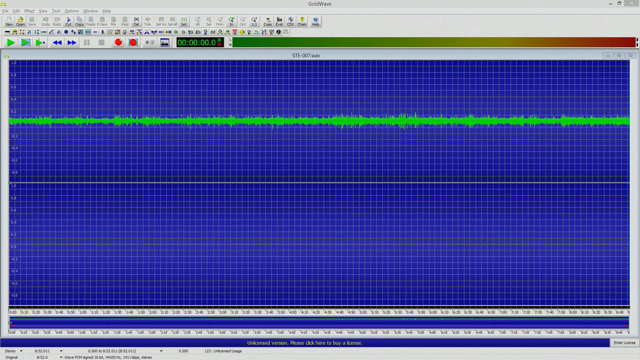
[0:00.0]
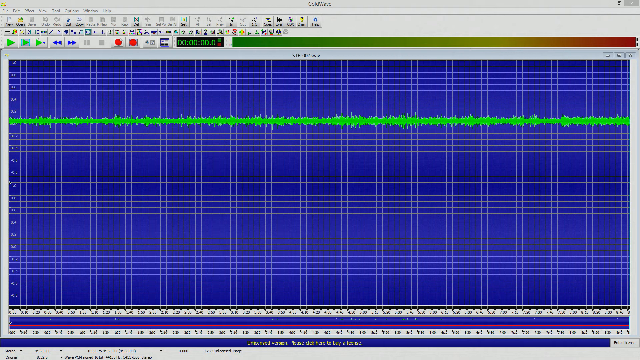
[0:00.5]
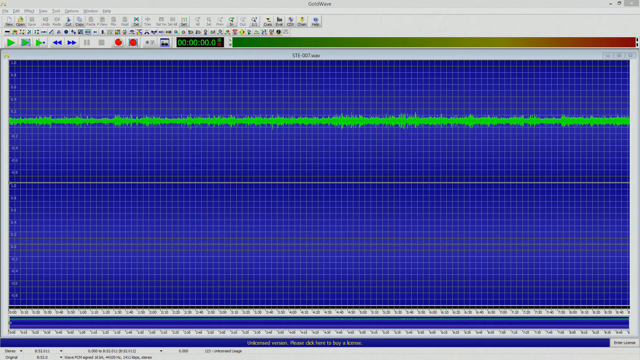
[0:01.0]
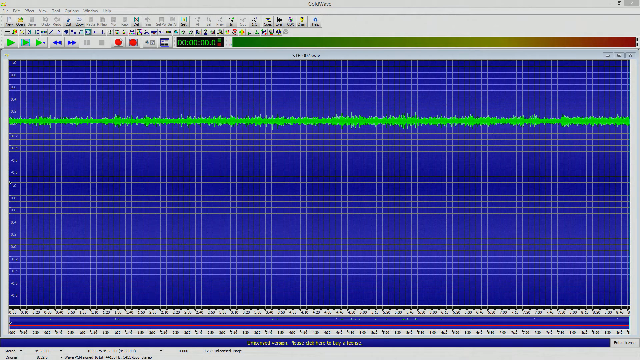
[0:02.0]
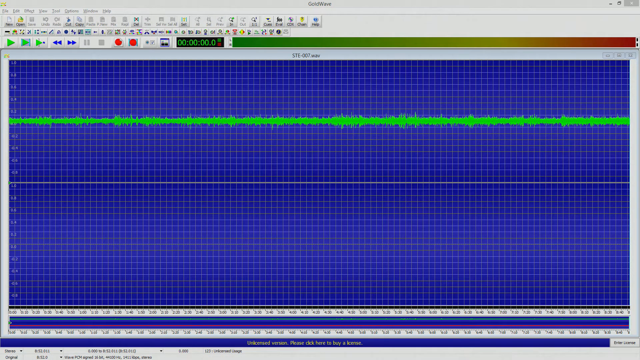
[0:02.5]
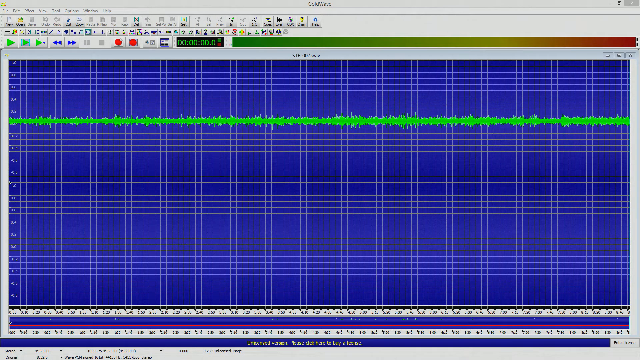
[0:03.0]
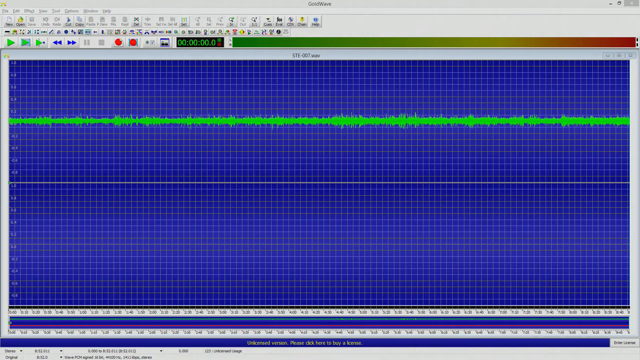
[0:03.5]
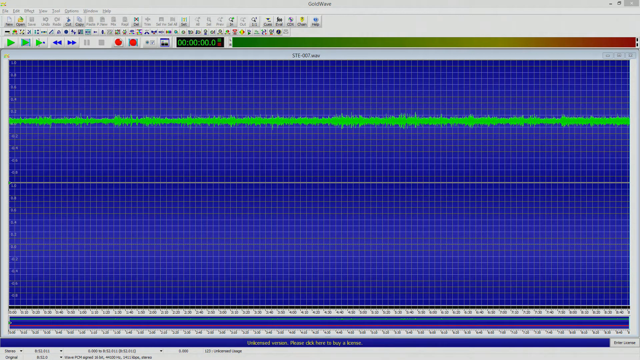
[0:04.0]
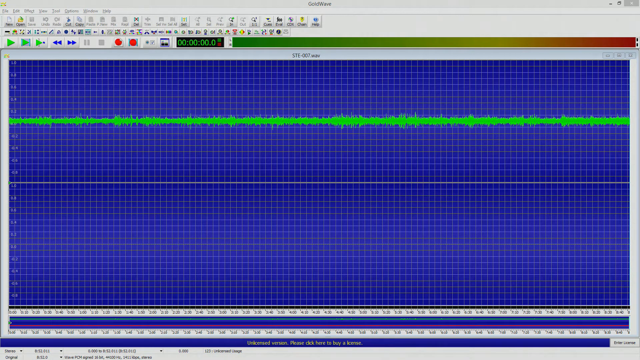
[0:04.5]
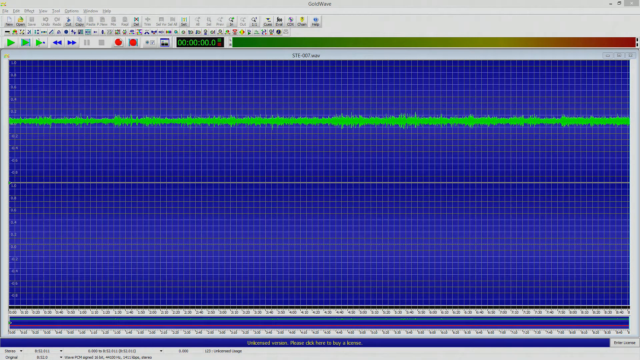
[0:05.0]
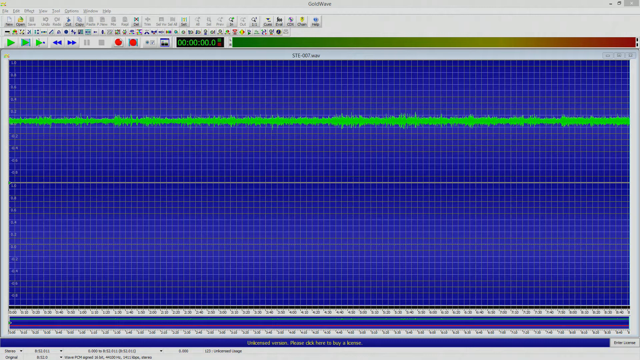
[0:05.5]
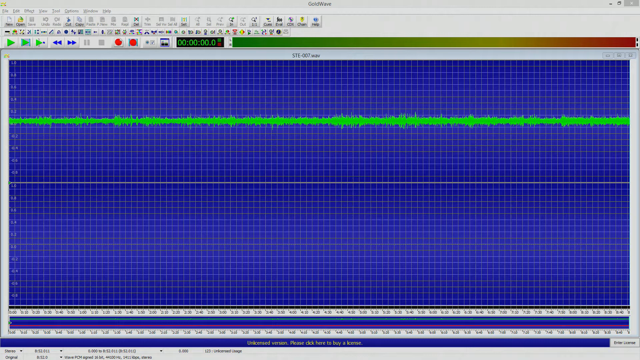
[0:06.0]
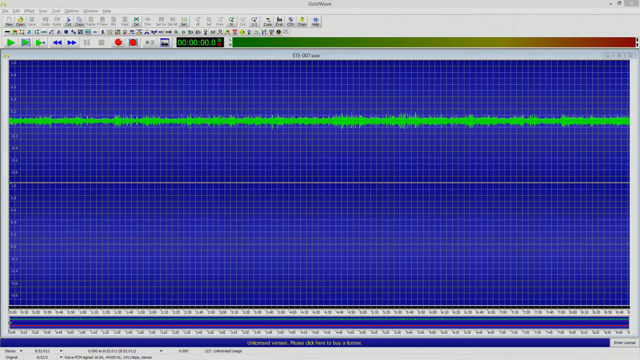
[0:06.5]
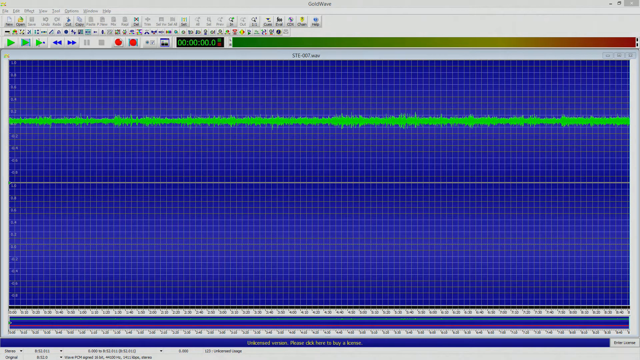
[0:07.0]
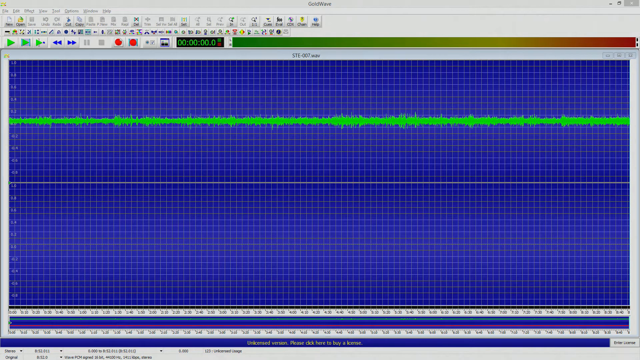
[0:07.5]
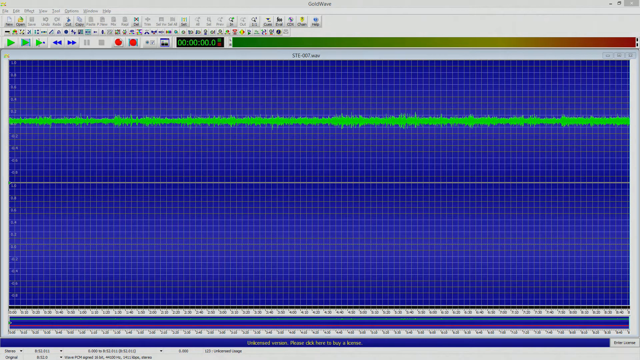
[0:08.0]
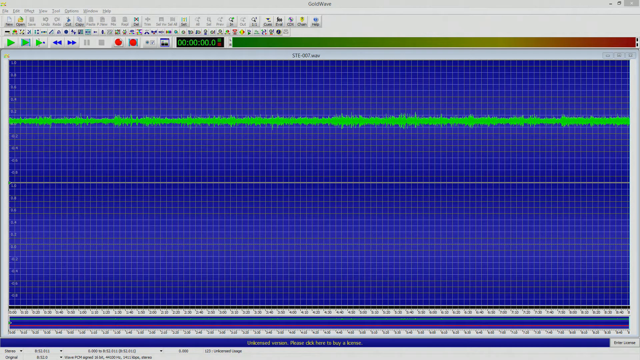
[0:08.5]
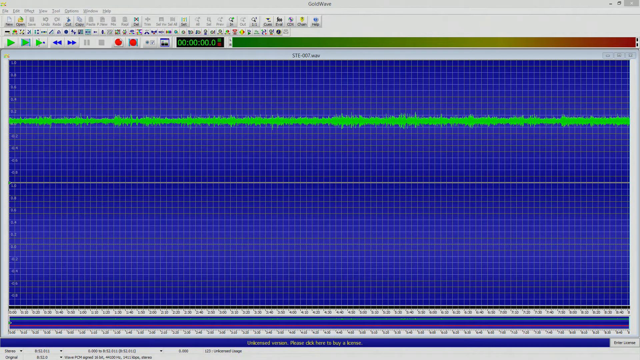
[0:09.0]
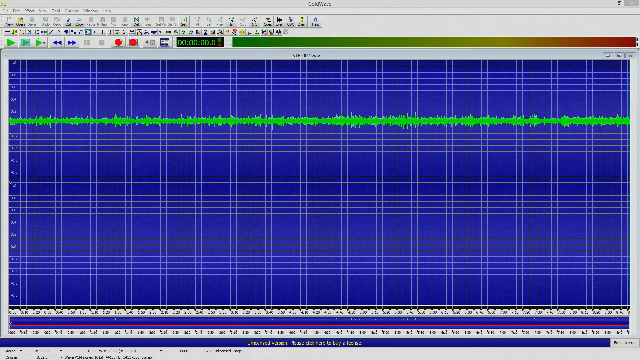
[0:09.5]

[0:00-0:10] A purple screen is covered with small boxes. A lime green line goes across it; it is not a solid line but has jagged edges, almost as if it is measuring something. Underneath it is a very faint gray line, and further down an even fainter gray line. The color is a bright bluish purple and eye-catching, and the screen looks like it is appearing on a computer. Beneath are two lines of numbers with a white border and black numbers.